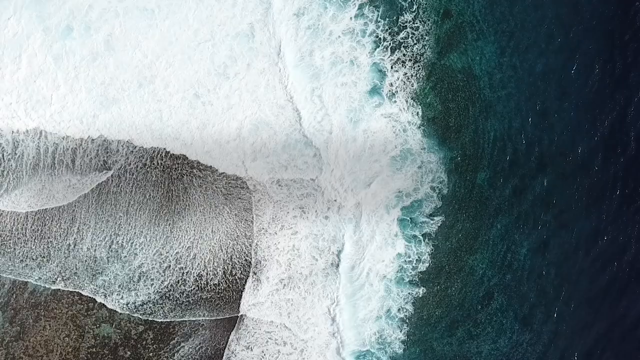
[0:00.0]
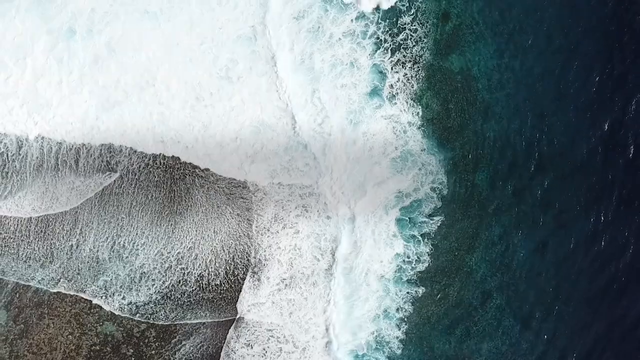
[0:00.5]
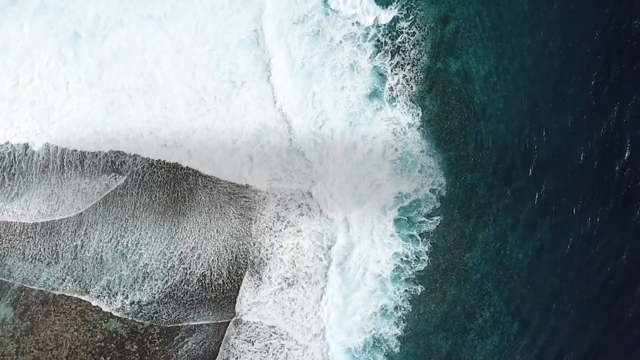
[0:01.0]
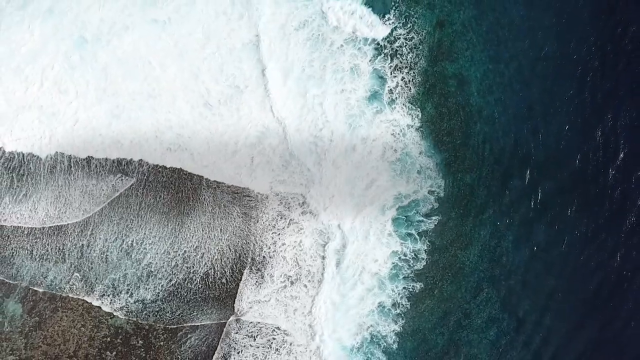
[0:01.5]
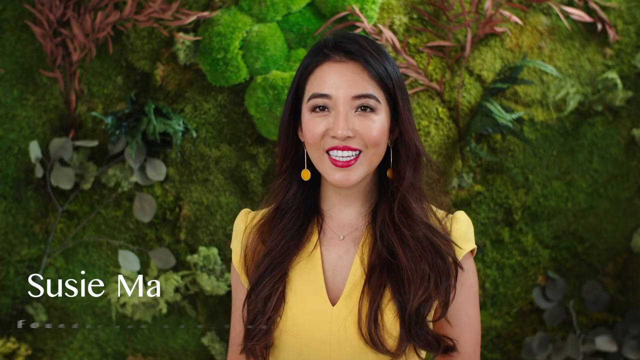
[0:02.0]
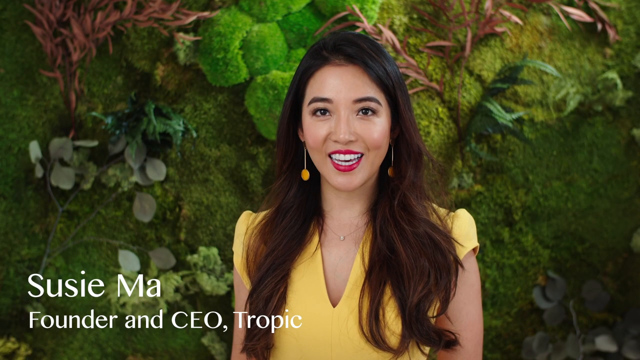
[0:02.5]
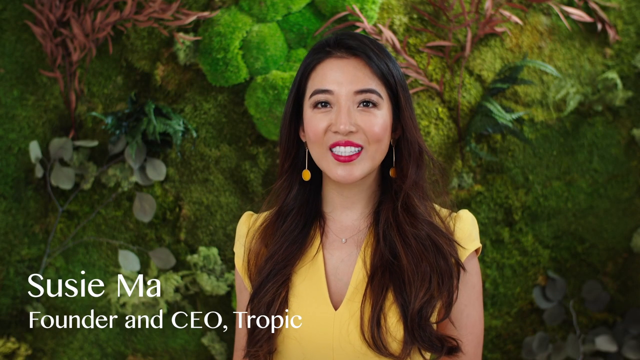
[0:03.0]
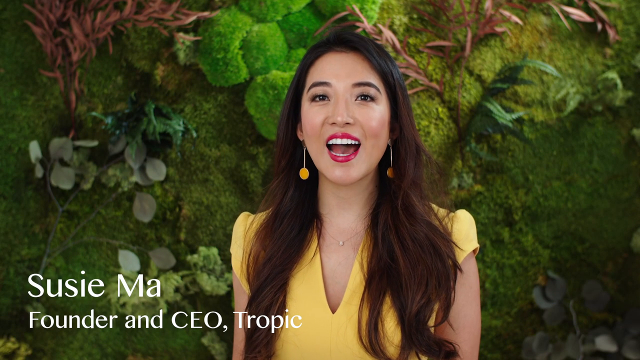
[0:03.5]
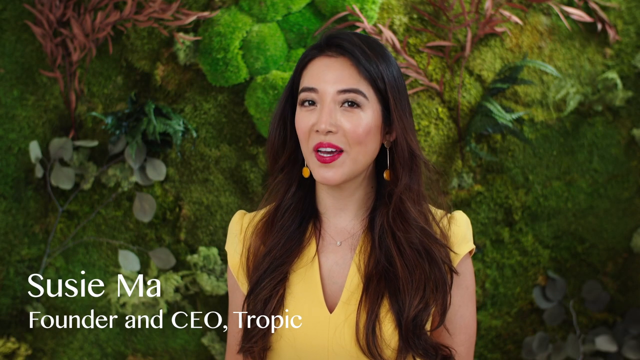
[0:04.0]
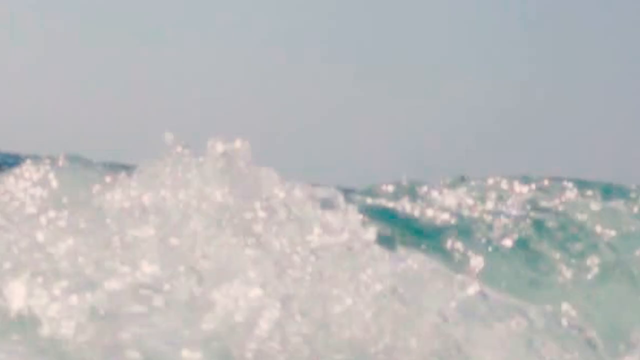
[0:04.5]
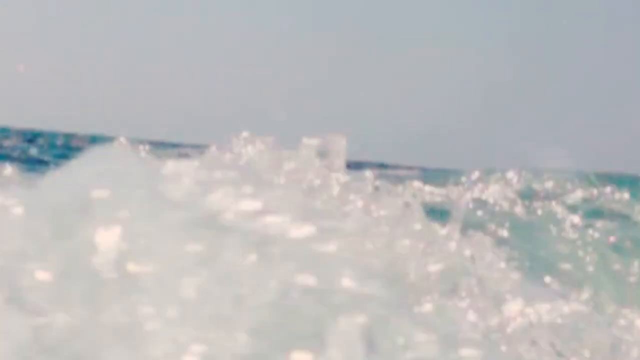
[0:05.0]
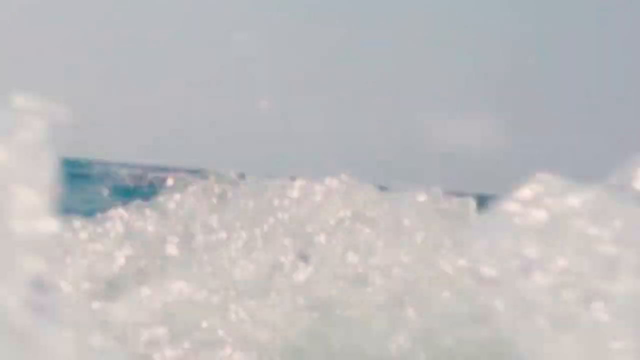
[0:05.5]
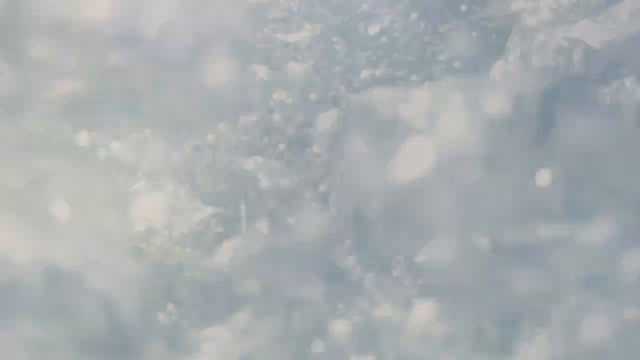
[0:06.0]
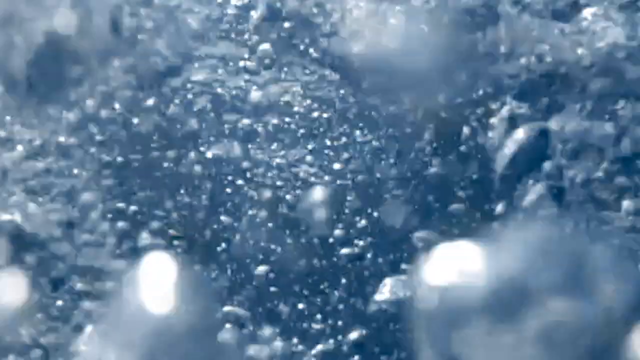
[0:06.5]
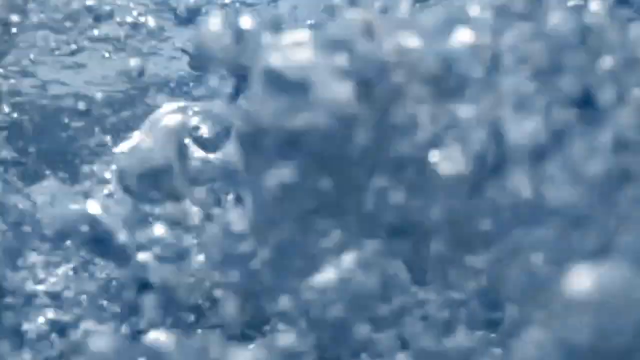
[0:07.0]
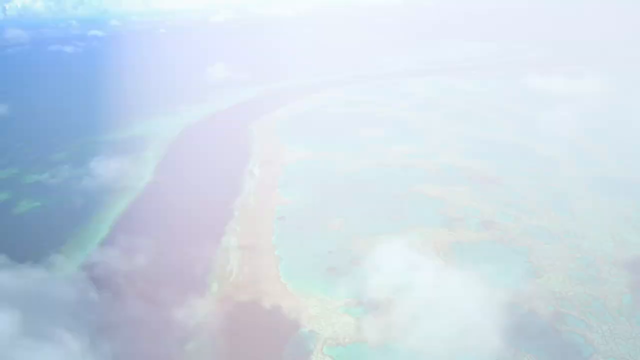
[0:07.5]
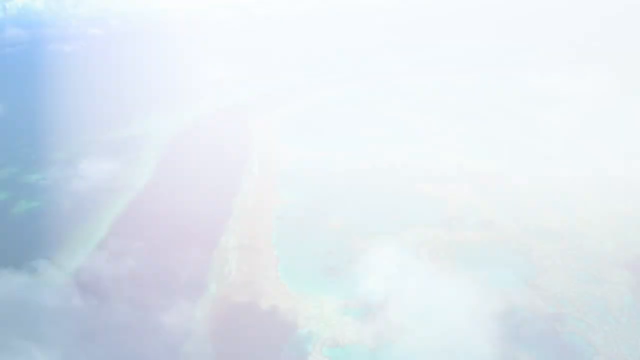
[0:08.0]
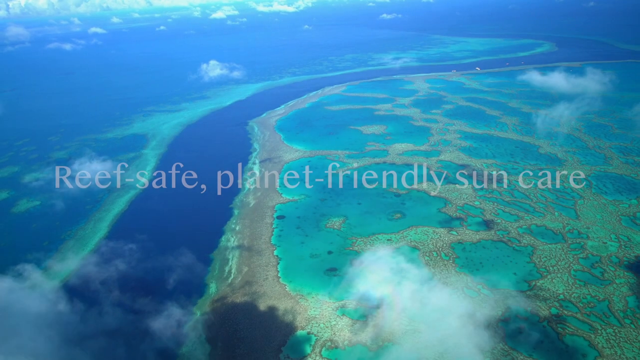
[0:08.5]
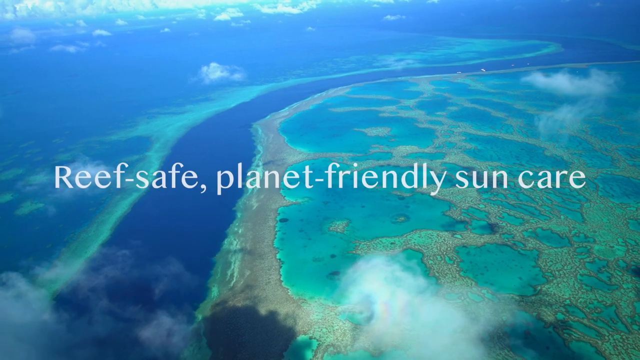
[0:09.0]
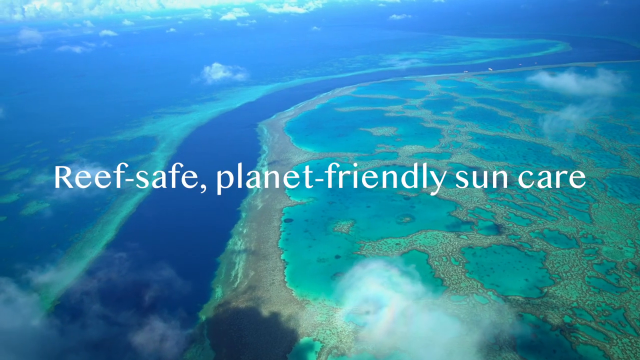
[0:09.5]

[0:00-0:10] An overhead view shows what appears to be ocean water, with lots of white waves and ripples; the water is dark blue. The next shot shows the founder of Tropic, named Susan Ma, standing in front of a grassy, mossy, green area. She is speaking, and her hands are not visible. She wears a yellow top and has long black hair. After a few seconds the screen cuts to a low-level water shot with the camera submerged; waves splash against it before it goes completely underwater, and bubbles appear. The screen then transitions to an overhead view of the islands and the ocean, with text that says "Reef-safe, planet-friendly sun care."